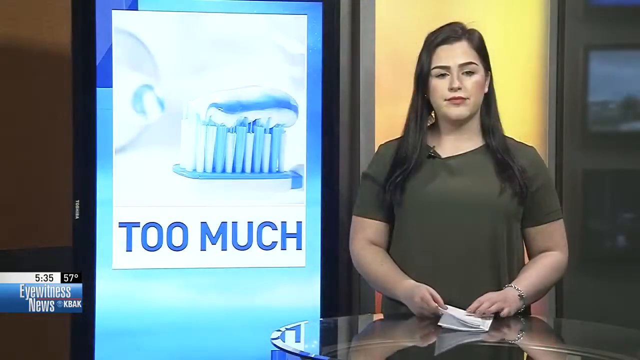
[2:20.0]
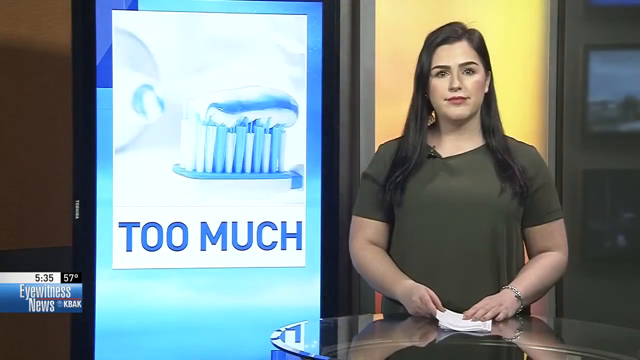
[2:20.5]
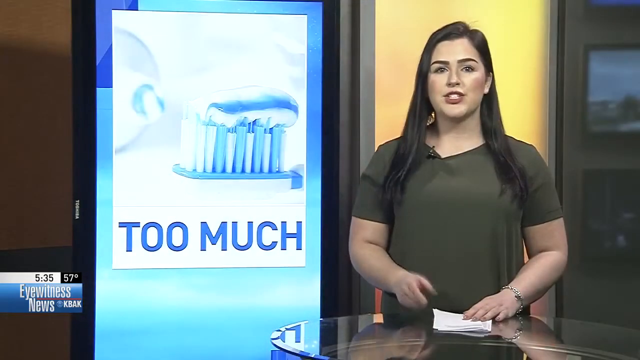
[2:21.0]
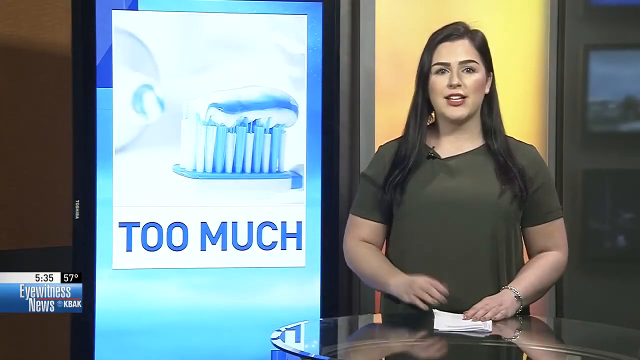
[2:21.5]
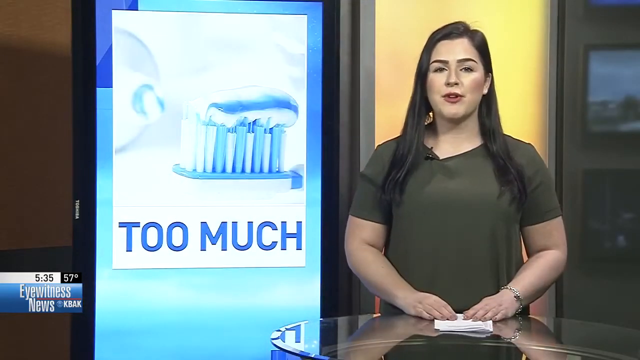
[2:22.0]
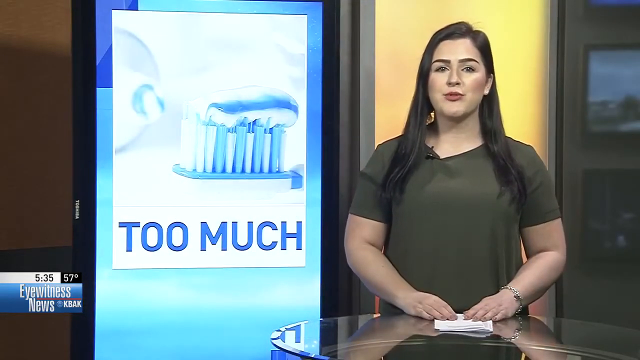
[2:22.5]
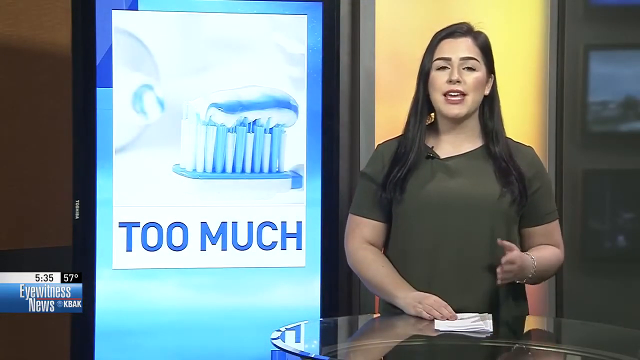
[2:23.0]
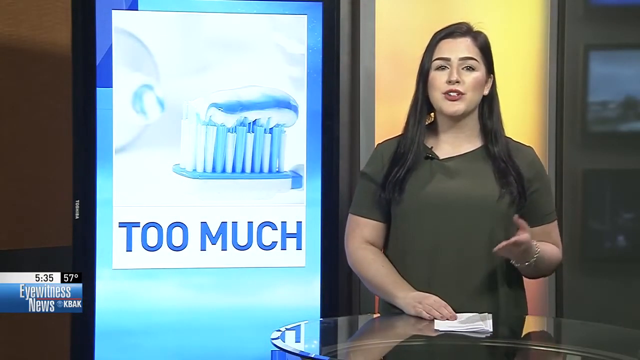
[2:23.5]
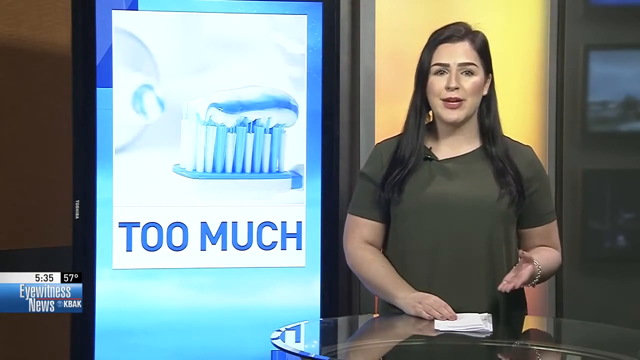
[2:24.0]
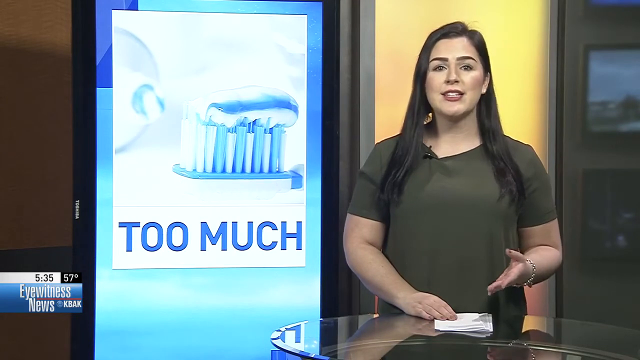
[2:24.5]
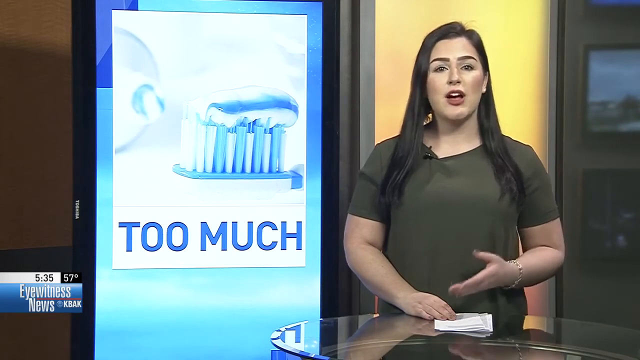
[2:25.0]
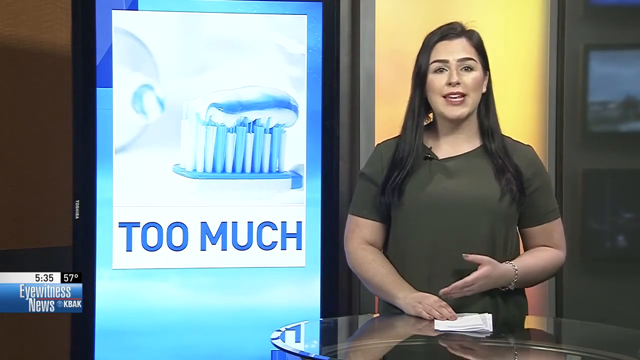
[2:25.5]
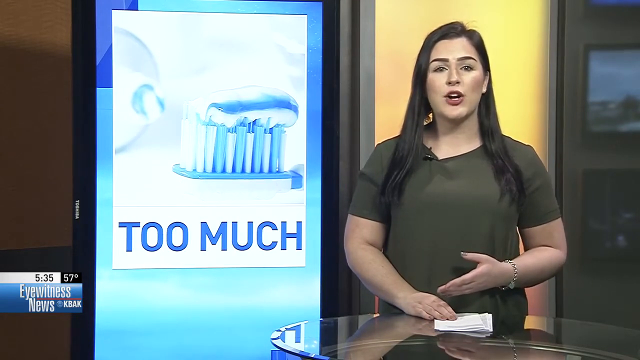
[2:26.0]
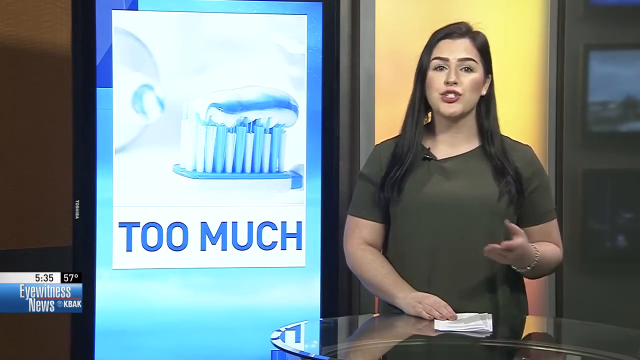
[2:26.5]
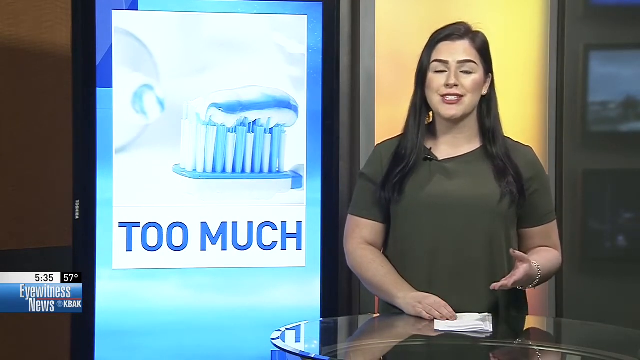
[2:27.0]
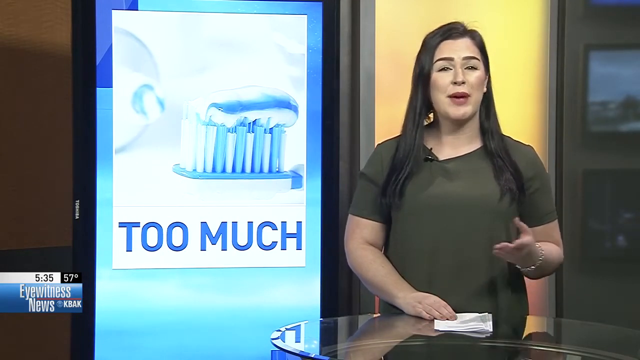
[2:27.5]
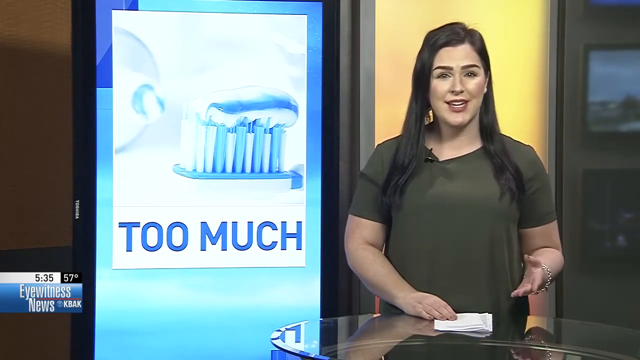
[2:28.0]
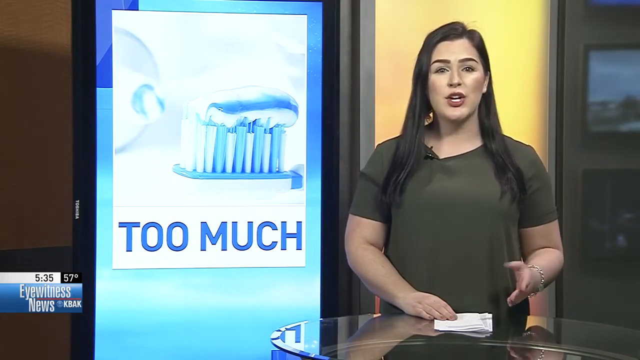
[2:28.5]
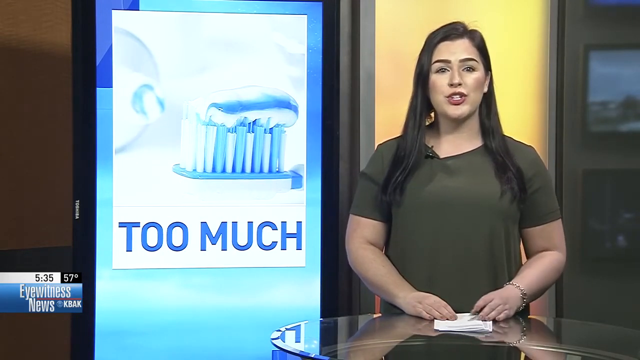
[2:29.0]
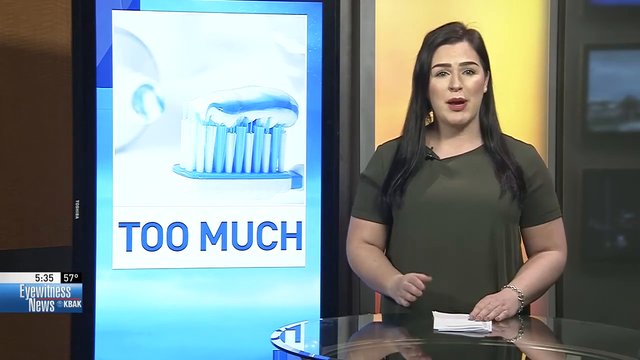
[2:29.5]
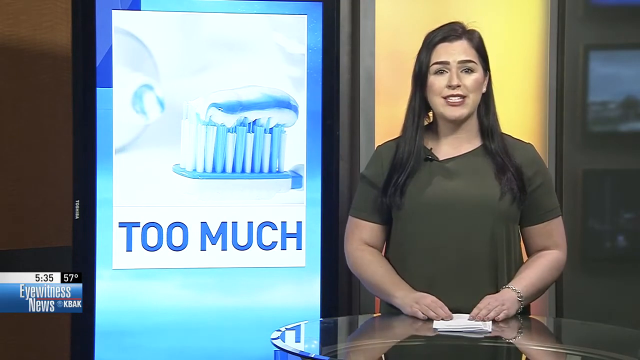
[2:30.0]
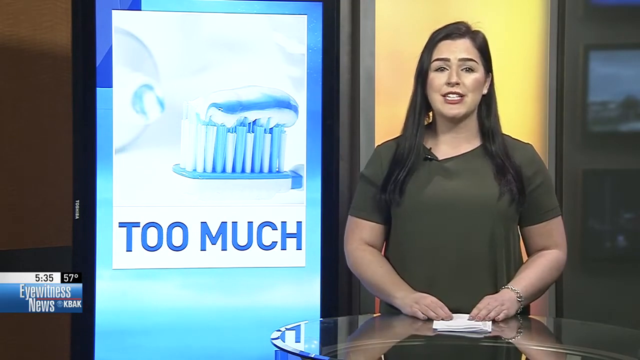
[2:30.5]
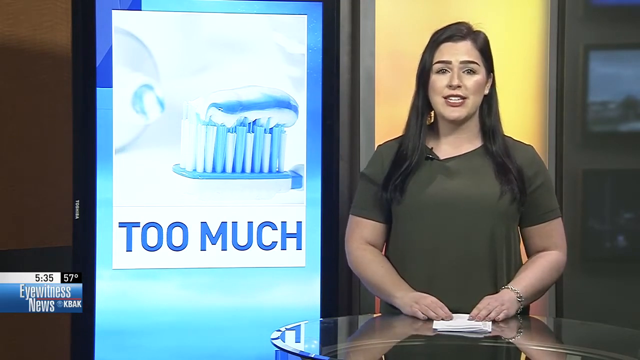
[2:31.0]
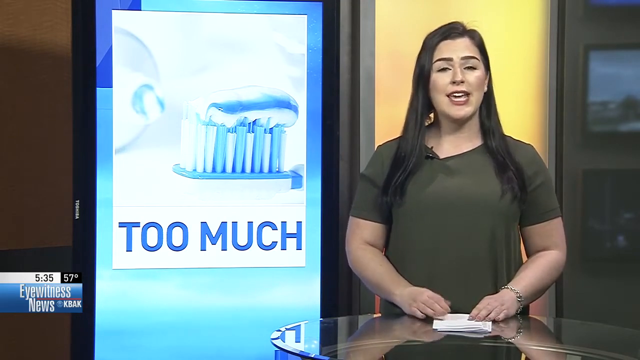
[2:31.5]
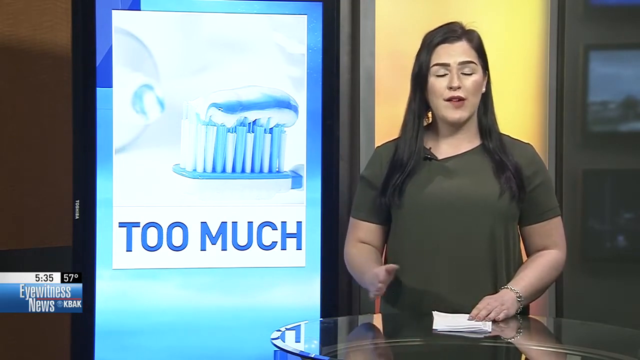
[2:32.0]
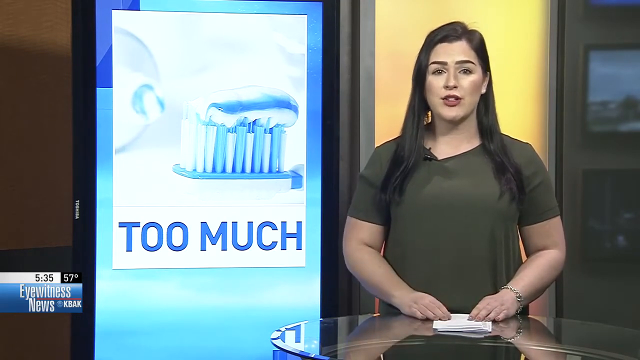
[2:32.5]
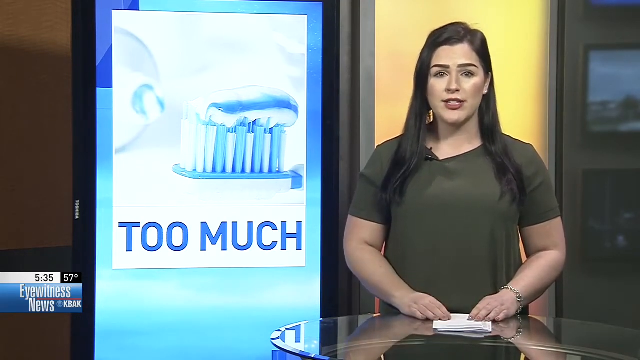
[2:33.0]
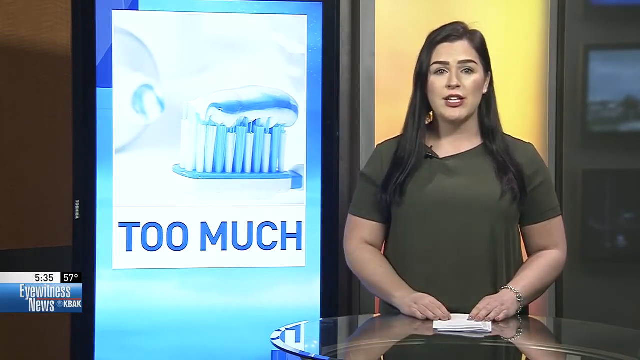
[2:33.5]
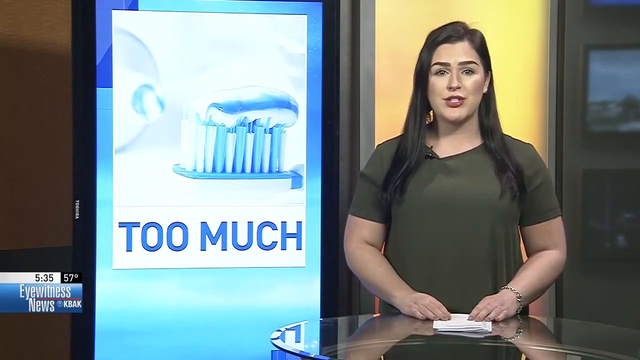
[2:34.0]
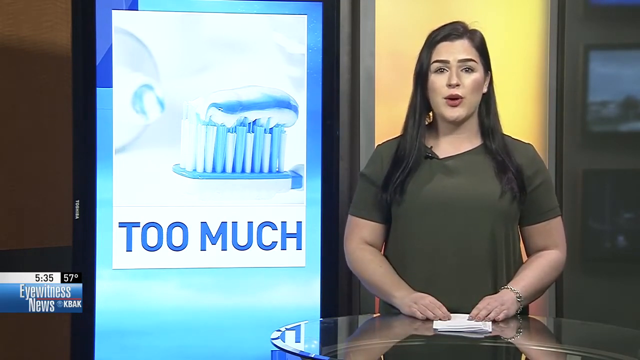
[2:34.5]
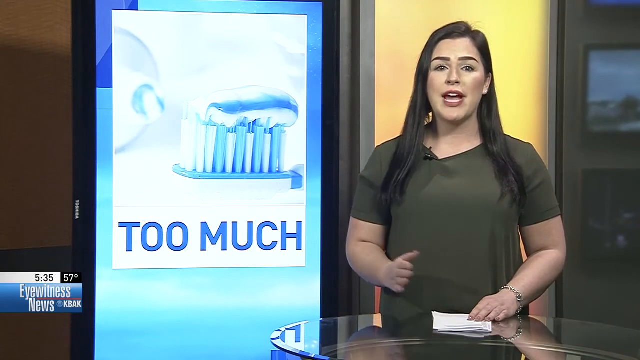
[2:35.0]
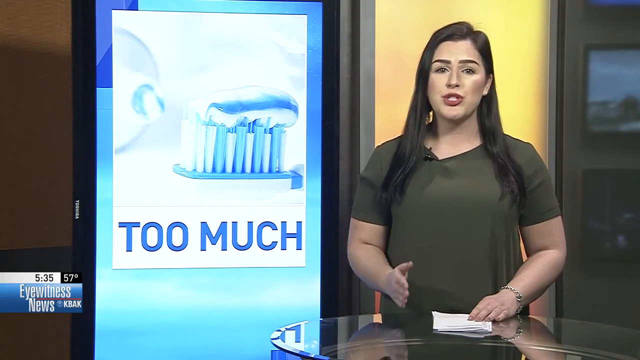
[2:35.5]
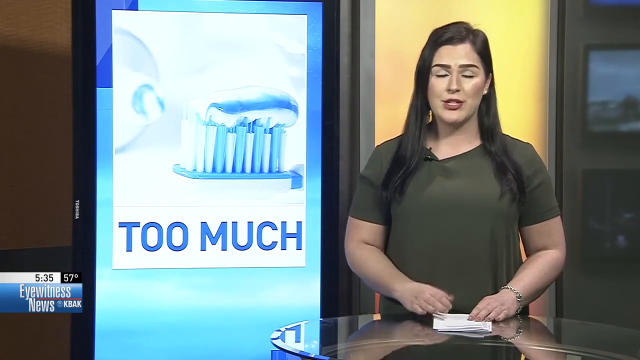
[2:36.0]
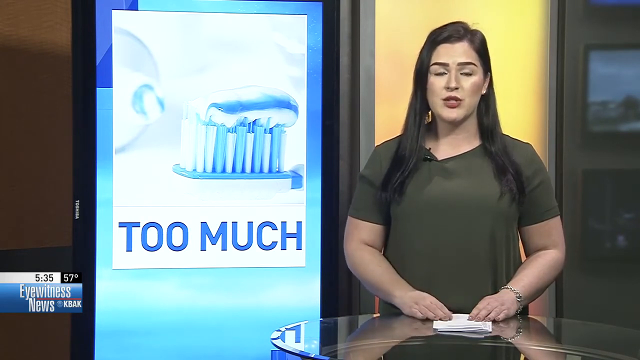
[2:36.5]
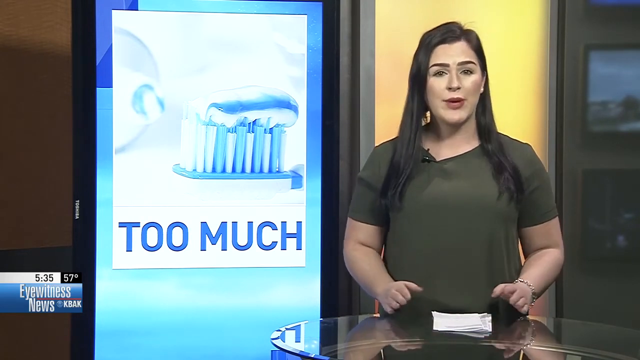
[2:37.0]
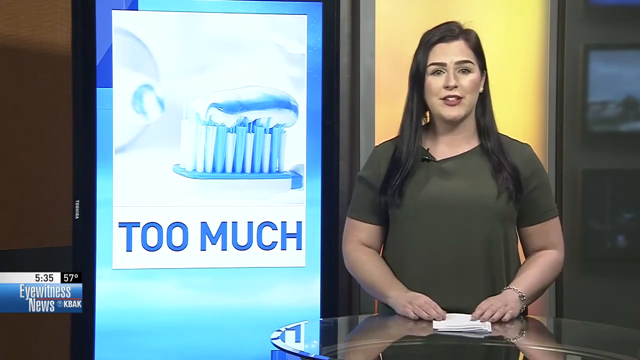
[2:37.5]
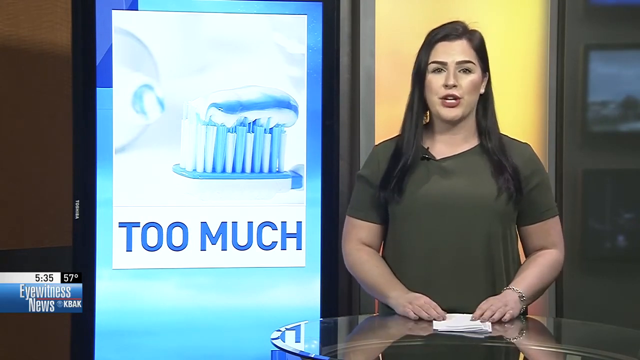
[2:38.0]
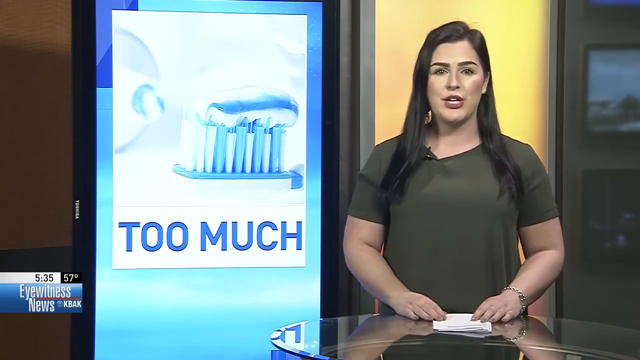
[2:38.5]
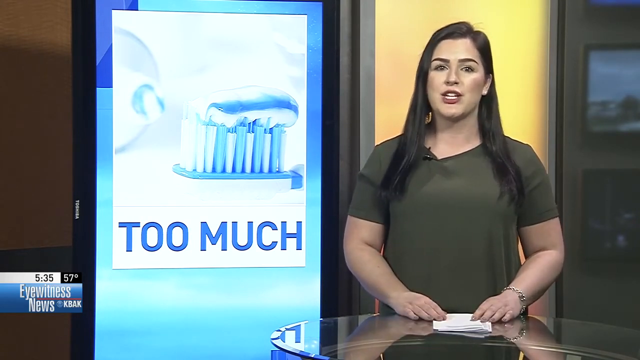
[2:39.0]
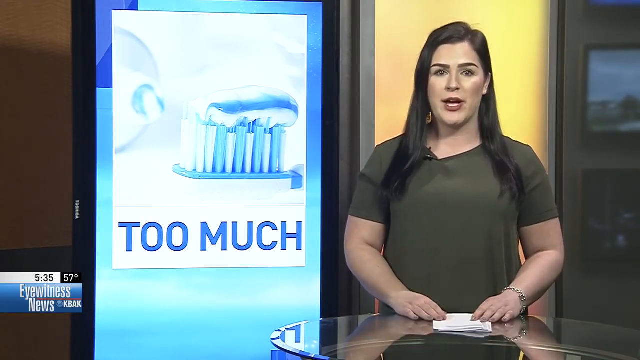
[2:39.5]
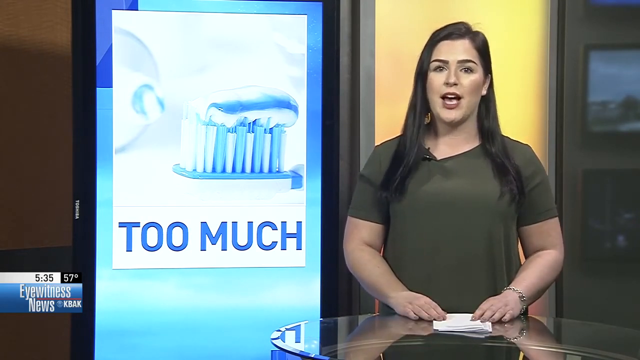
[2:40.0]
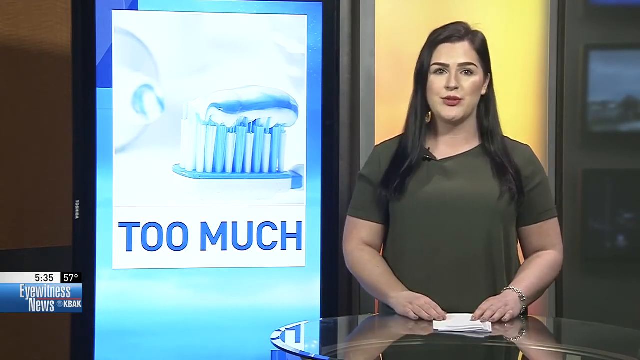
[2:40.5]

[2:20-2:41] A woman with dark hair, wearing a green short-sleeve t-shirt, stands on the right side of the screen speaking to the camera, in front of a yellow wall, behind a flat surface with a piece of paper on it. With her arms bent at the elbows, she gestures with her right hand, briefly flipping it from palm down to palm up and back. She then lifts her left hand, flips it palm up, and makes three or four movements, sways the open hand a little toward her abdomen and back out, and raises and lowers her hands slightly in time with her speech. Occasionally she raises her right hand again, flipping it partially so the palm faces sideways, then puts it back down onto the paper. To her right is a light blue and white screen showing a toothbrush with toothpaste on it, a cut-off image of a toothpaste tube, and the words "too much".